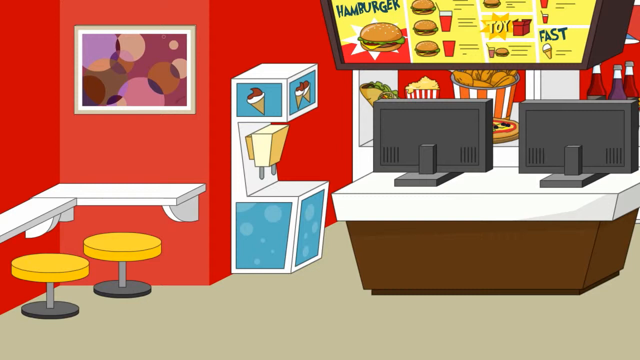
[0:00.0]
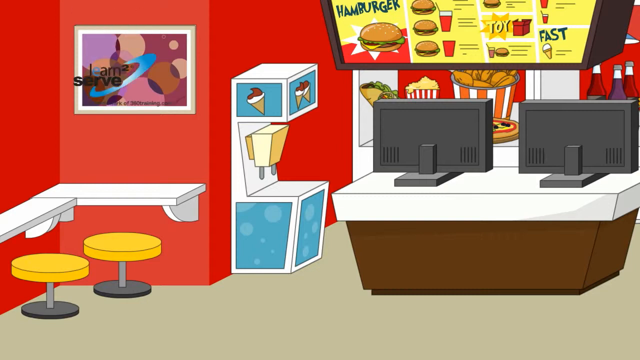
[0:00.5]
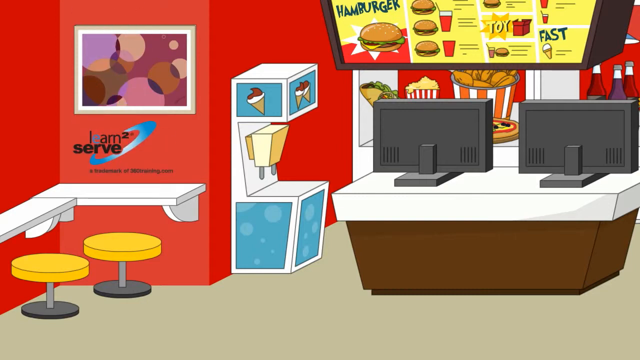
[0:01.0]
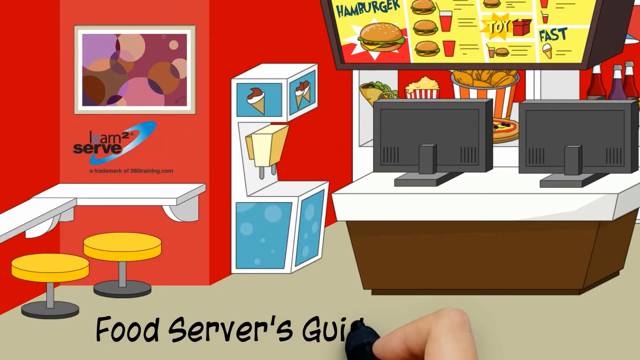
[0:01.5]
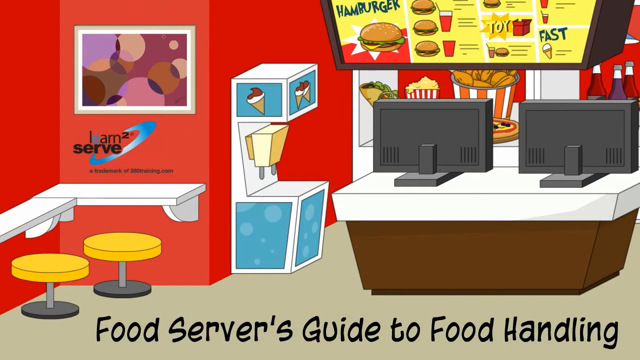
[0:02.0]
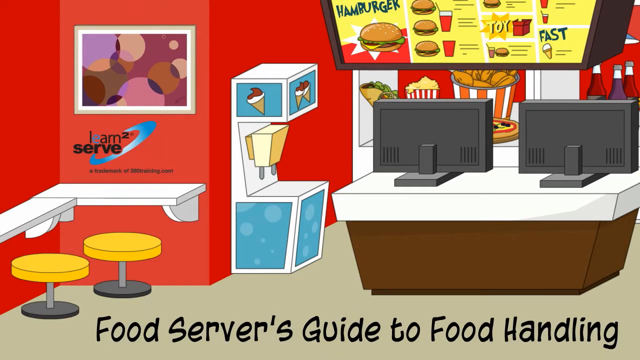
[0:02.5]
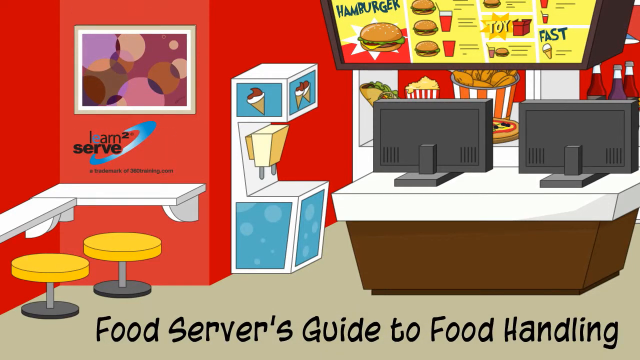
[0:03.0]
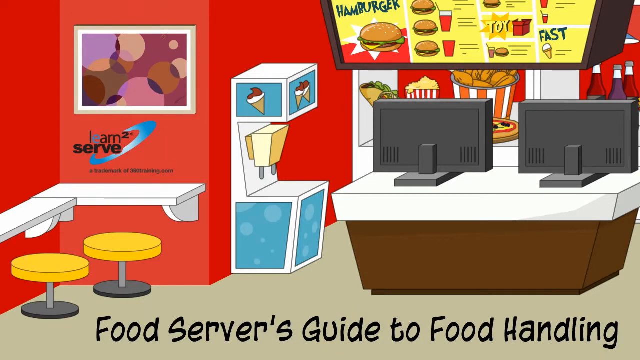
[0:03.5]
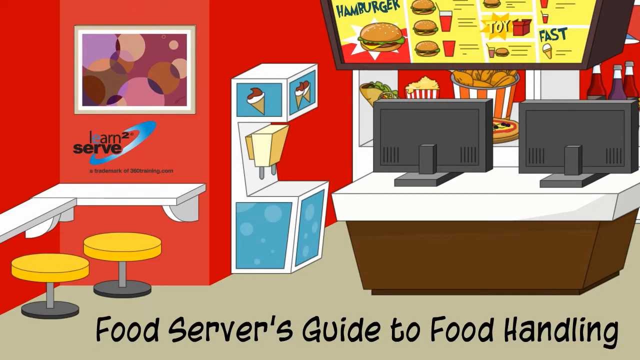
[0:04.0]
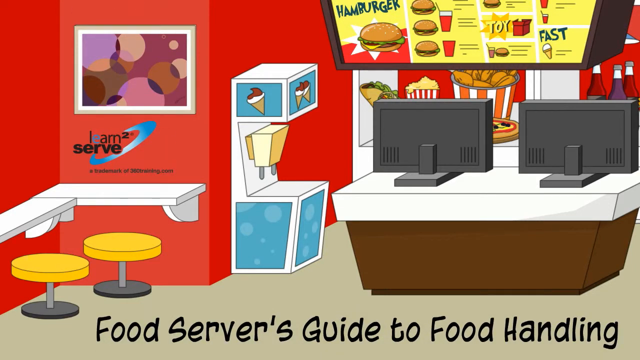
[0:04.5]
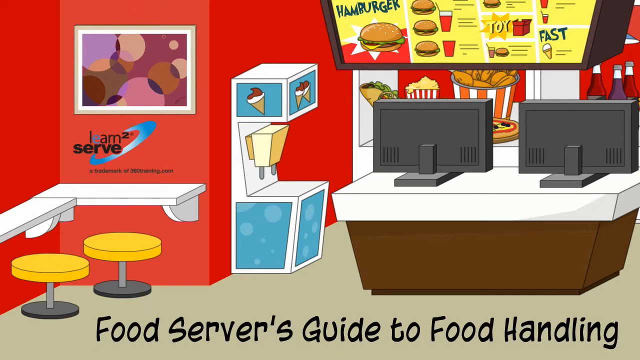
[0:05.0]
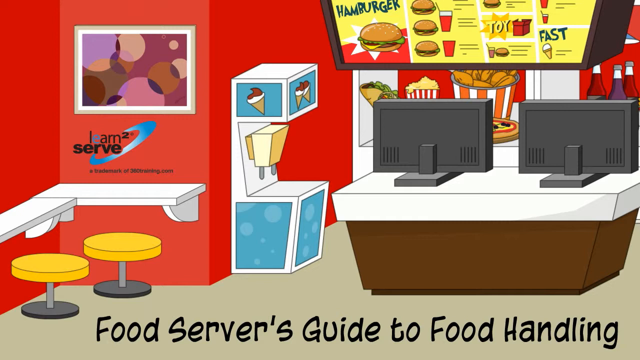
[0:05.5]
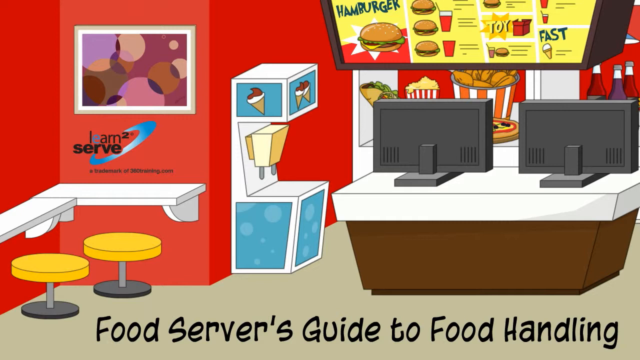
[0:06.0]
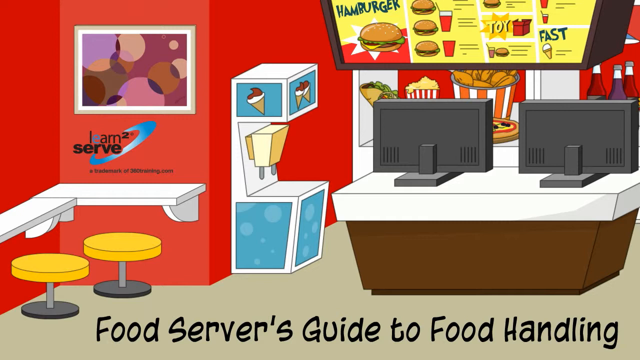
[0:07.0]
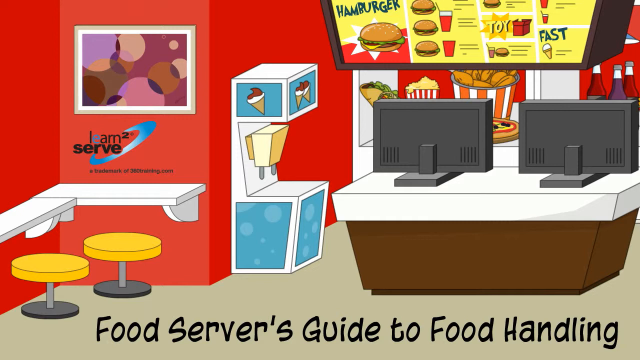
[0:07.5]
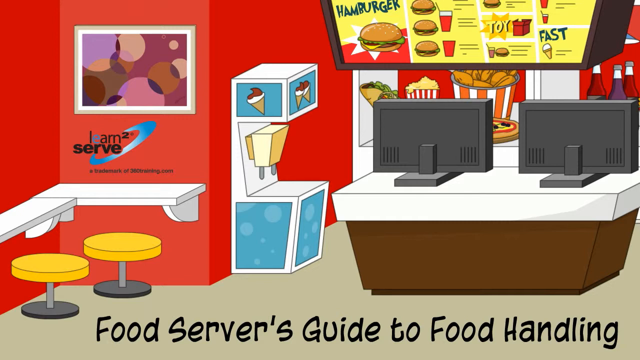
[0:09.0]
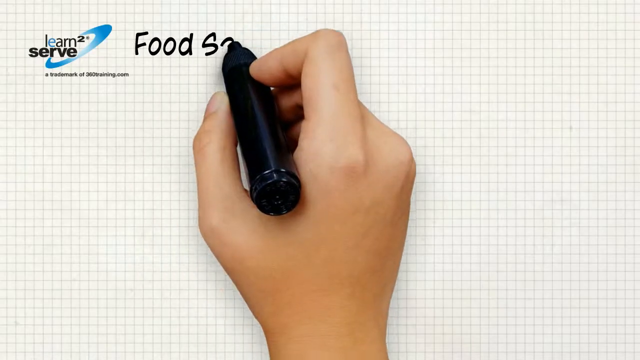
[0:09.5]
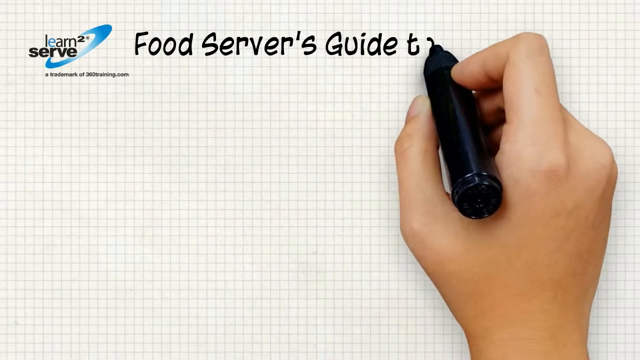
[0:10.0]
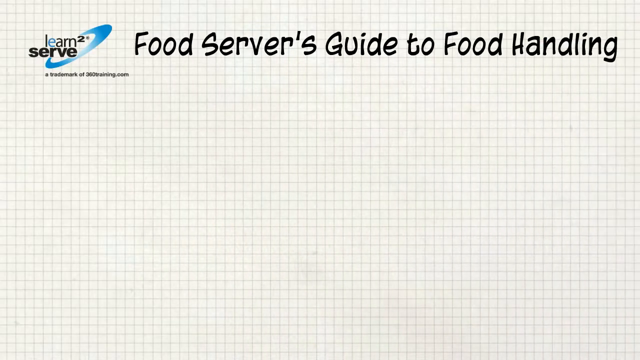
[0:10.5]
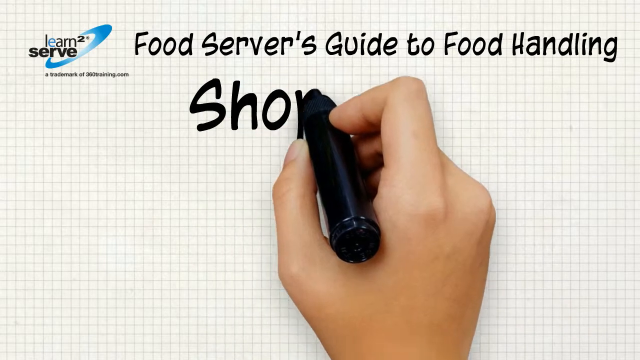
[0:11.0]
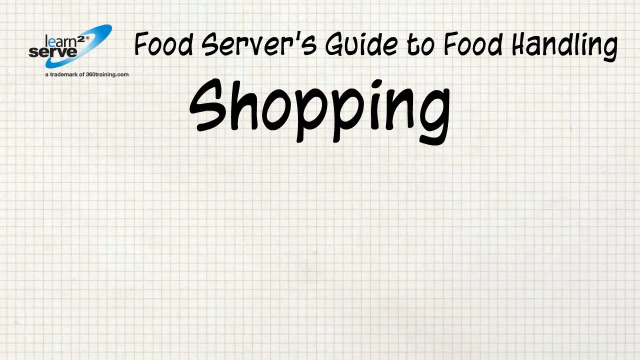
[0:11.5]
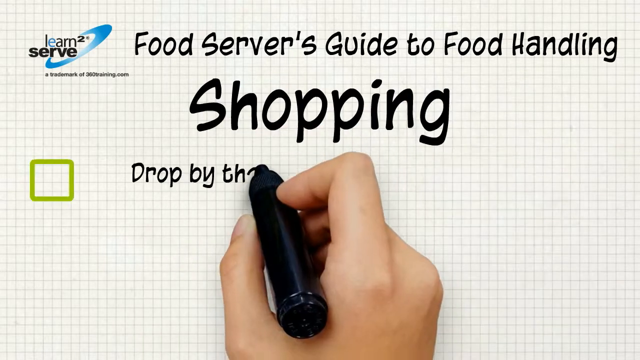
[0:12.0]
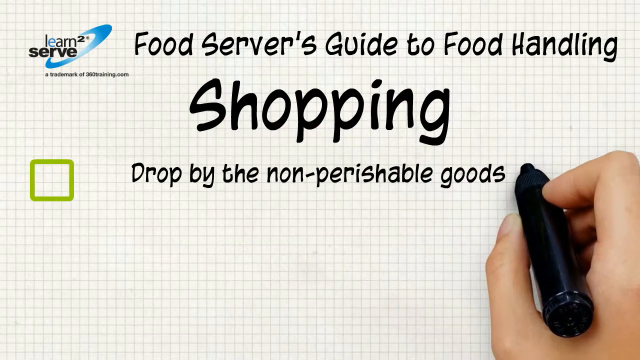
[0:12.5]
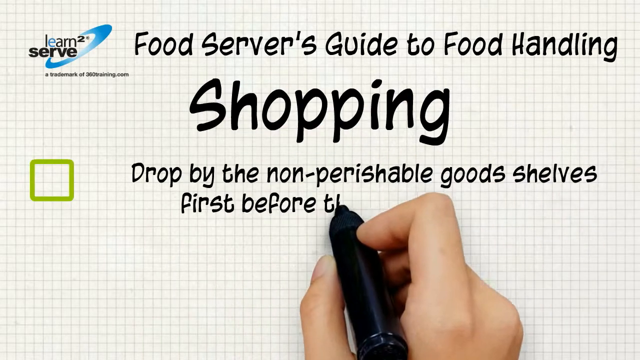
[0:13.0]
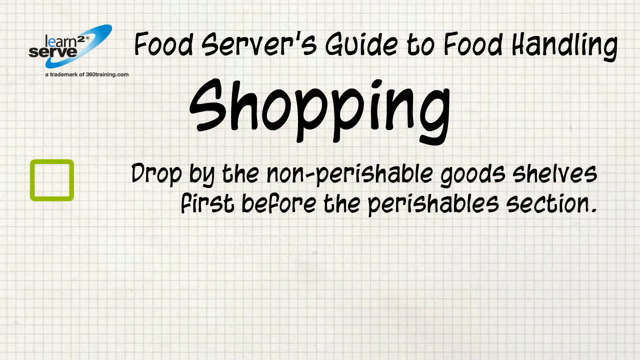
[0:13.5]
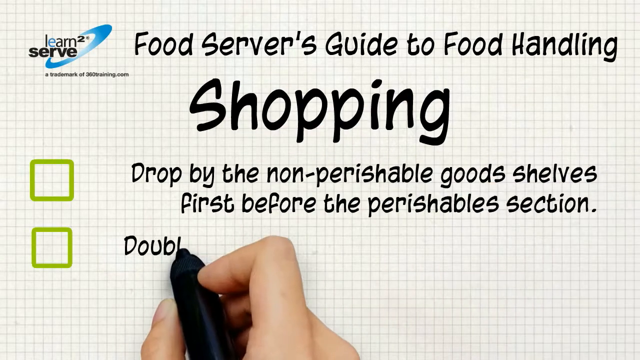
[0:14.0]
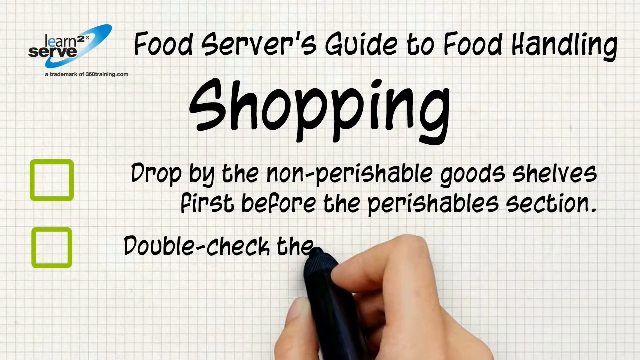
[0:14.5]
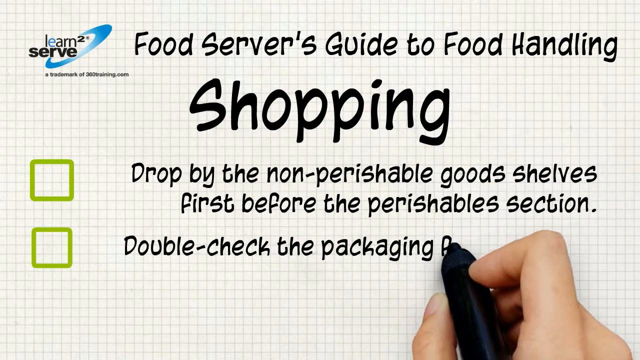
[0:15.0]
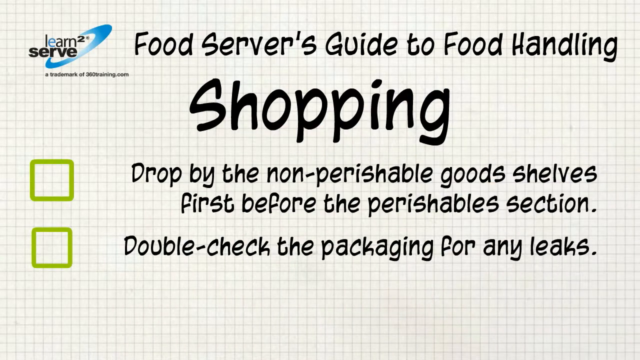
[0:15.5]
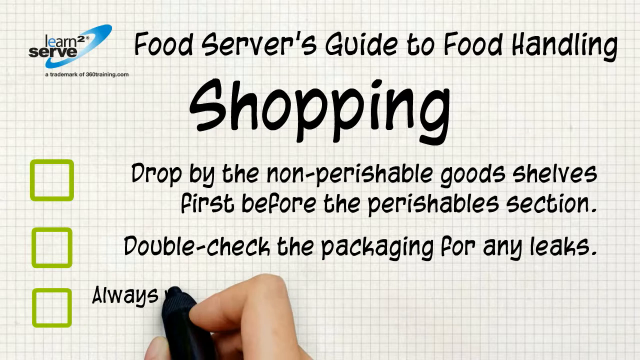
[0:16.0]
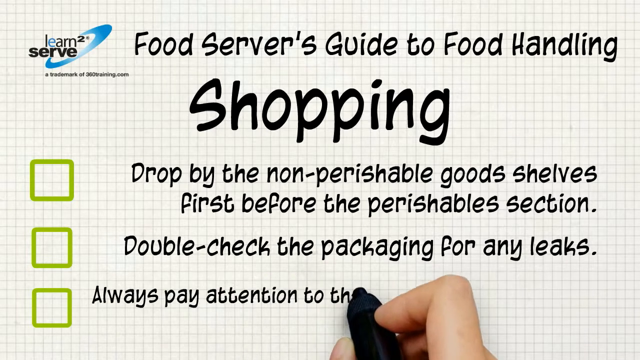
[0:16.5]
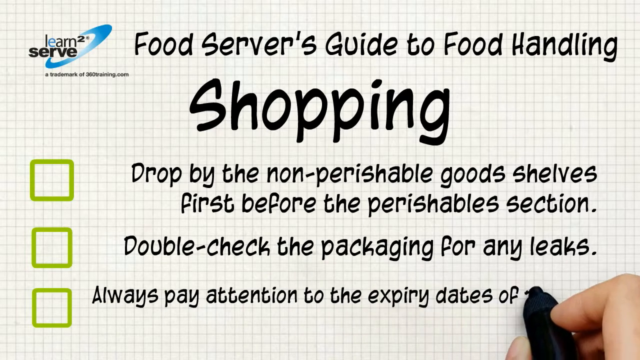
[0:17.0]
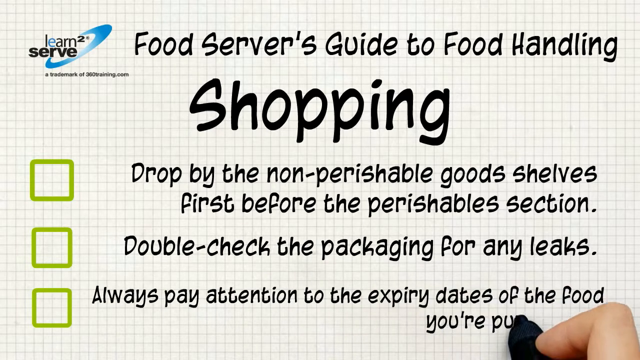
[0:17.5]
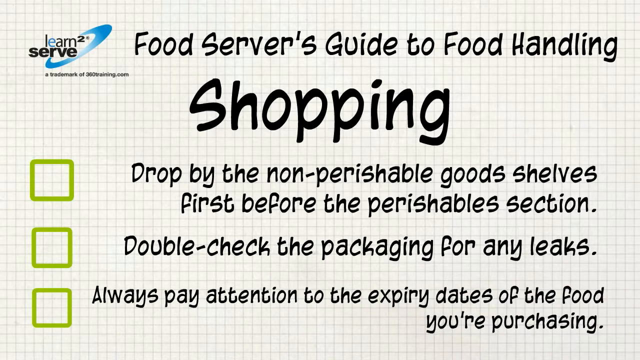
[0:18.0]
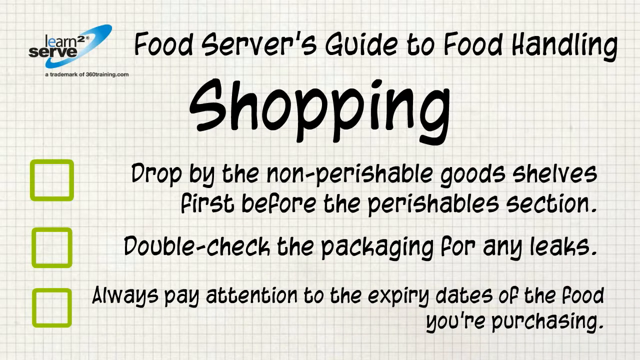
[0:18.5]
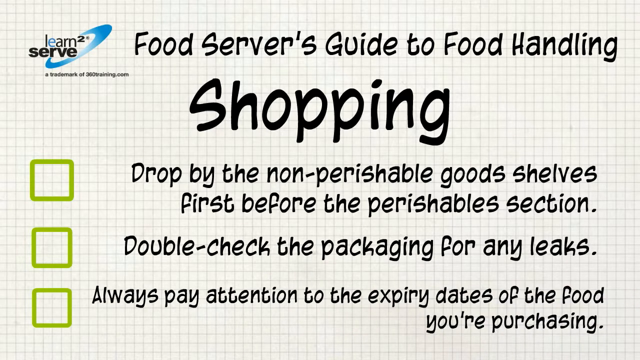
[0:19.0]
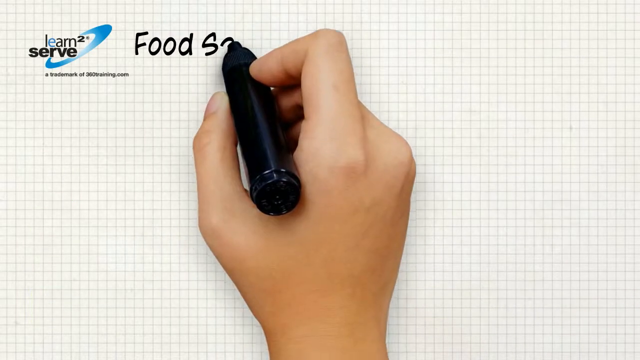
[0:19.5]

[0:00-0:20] The video opens with a food server's guide to food handling, starting with shopping. It begins with a digitalized, realistic-art drawing showing some food, including a hamburger, food pressed on a screen, two desktops, some chairs and some ice cream. After this drawing, guidelines on how to preserve and handle food appear. The writing is in black; someone writes with a pen, and green illustration squares are used to show the different examples and steps of the procedures.